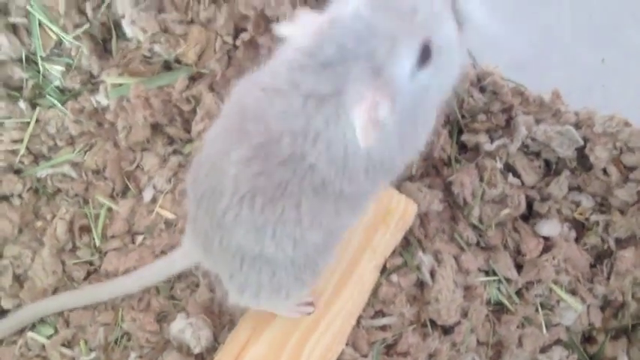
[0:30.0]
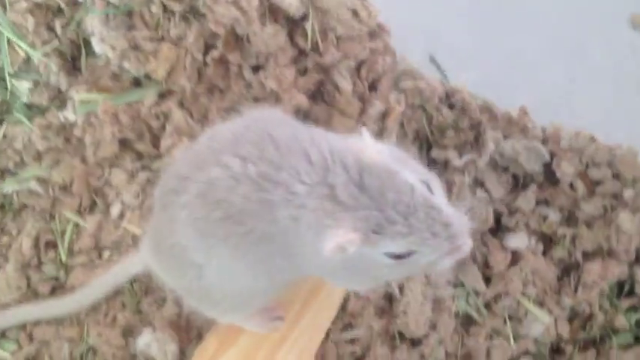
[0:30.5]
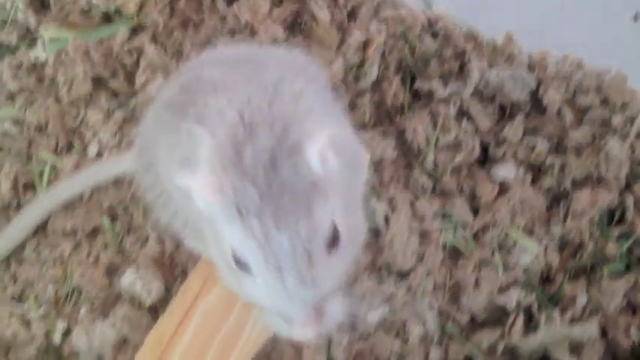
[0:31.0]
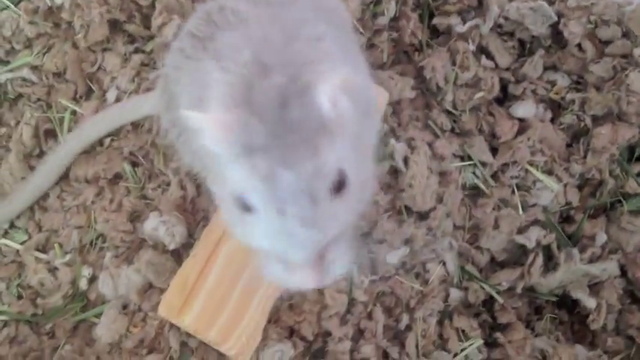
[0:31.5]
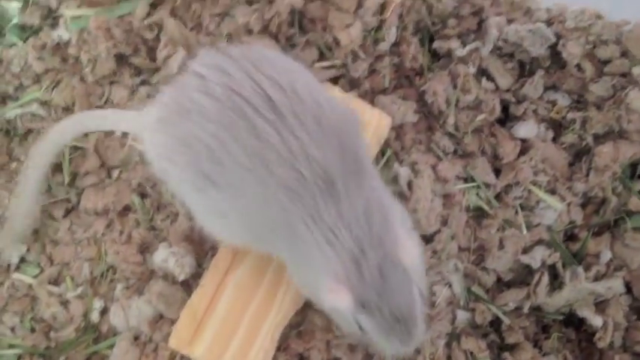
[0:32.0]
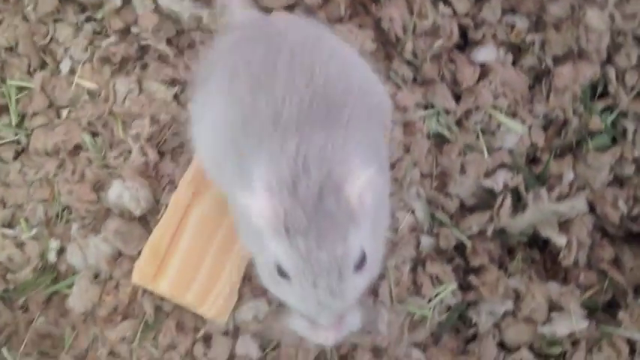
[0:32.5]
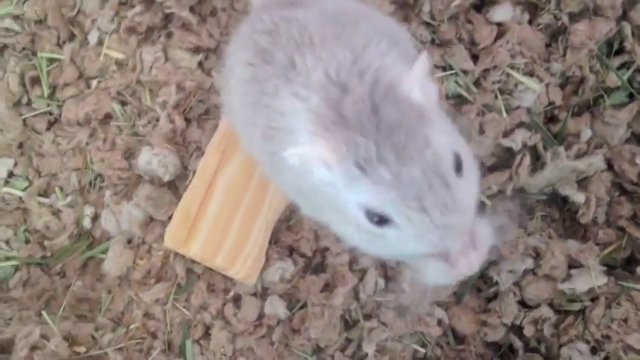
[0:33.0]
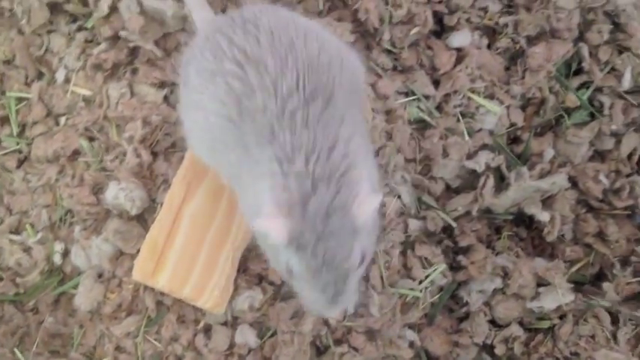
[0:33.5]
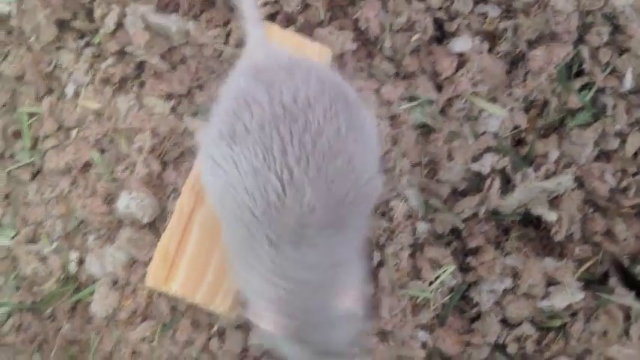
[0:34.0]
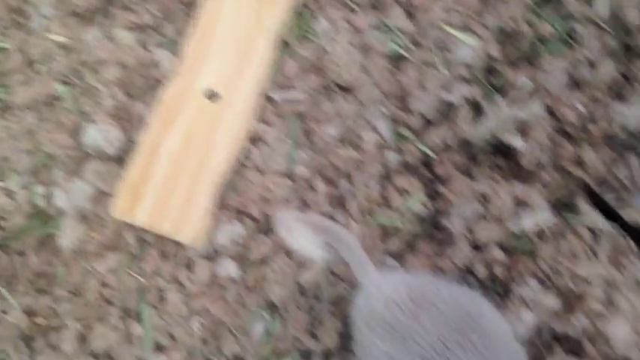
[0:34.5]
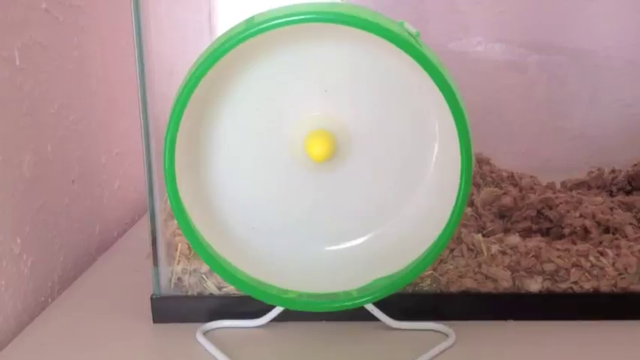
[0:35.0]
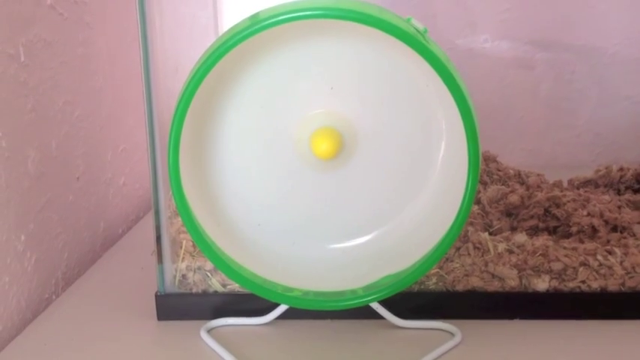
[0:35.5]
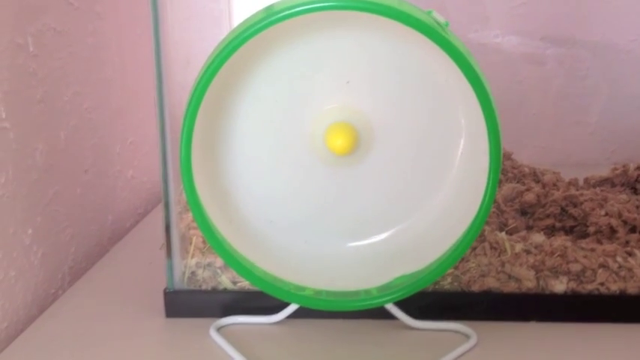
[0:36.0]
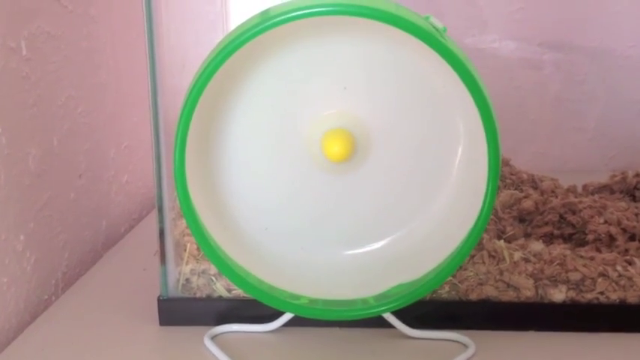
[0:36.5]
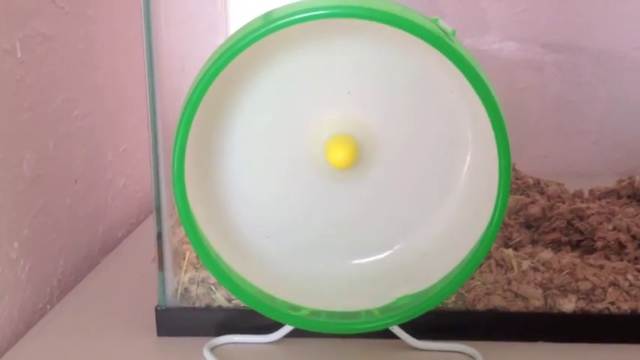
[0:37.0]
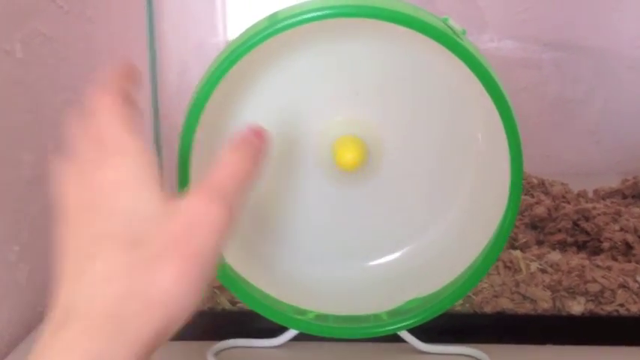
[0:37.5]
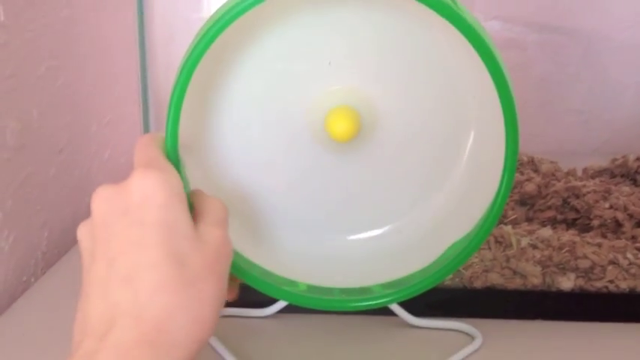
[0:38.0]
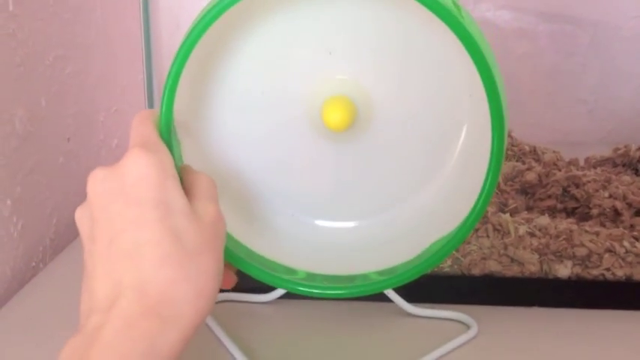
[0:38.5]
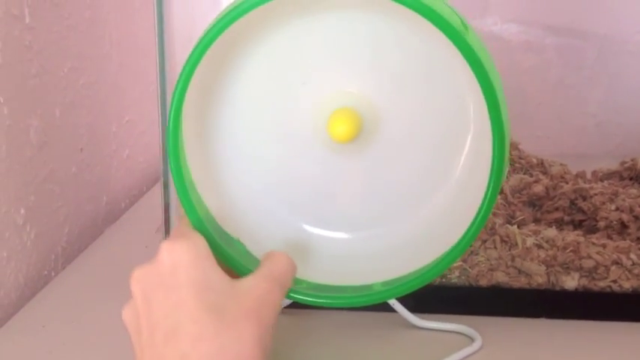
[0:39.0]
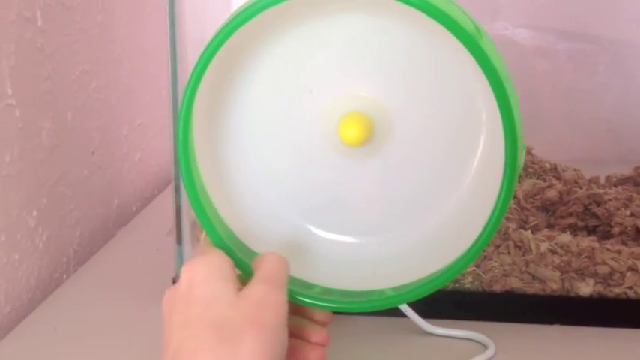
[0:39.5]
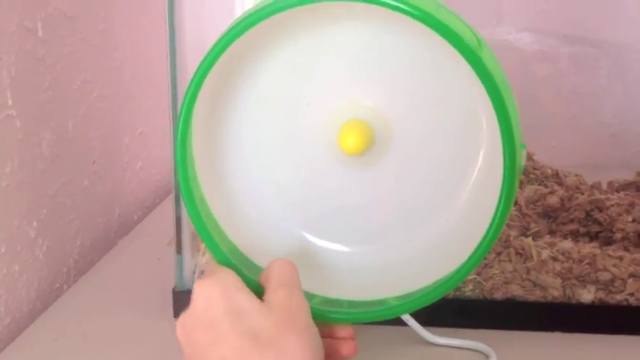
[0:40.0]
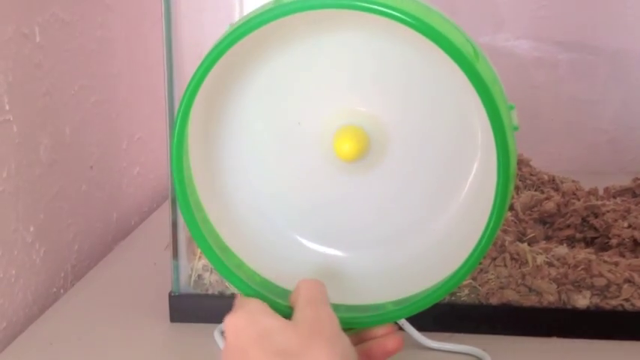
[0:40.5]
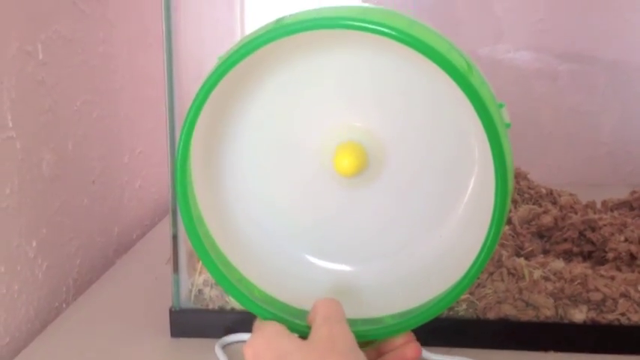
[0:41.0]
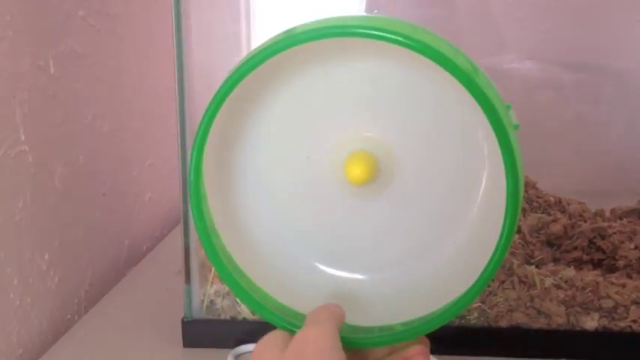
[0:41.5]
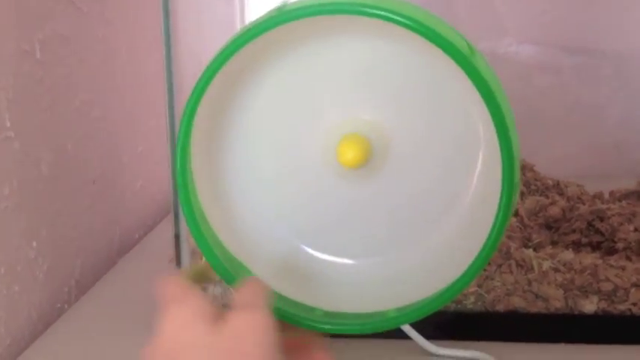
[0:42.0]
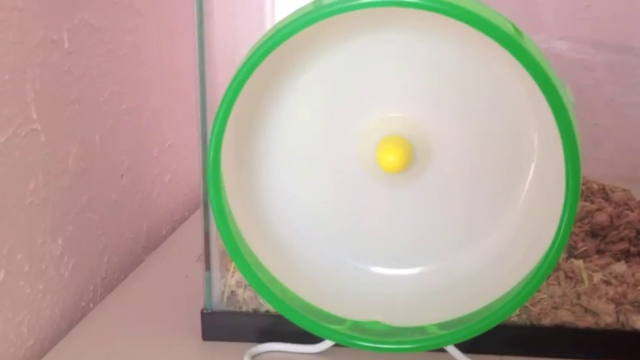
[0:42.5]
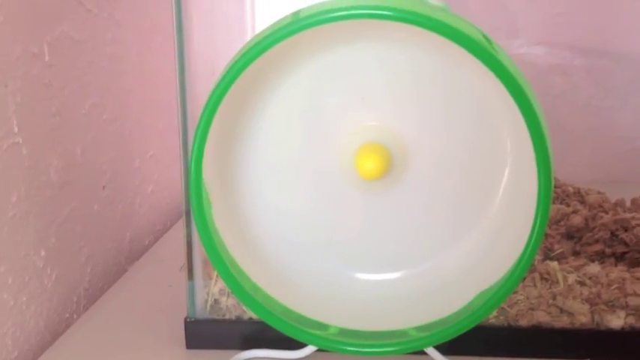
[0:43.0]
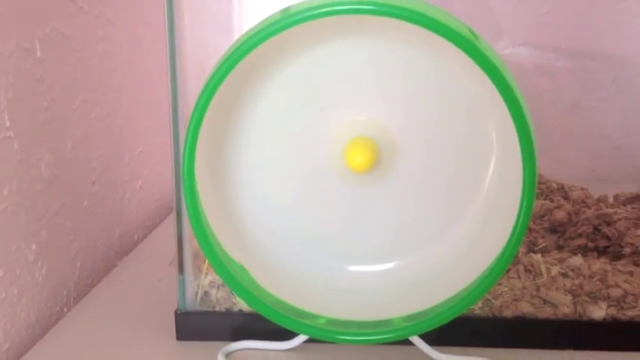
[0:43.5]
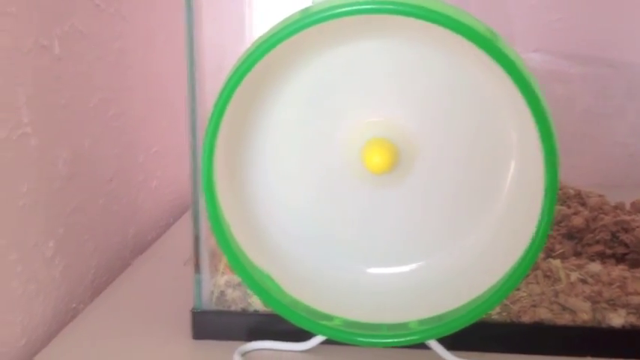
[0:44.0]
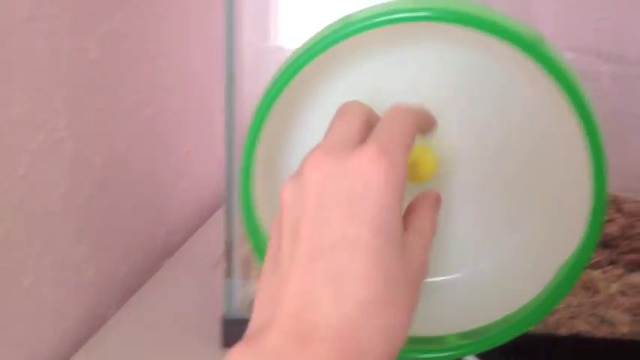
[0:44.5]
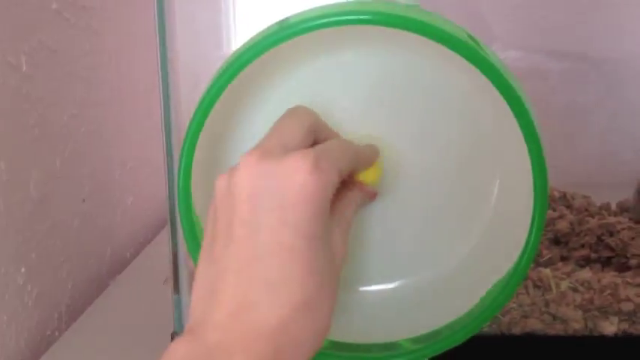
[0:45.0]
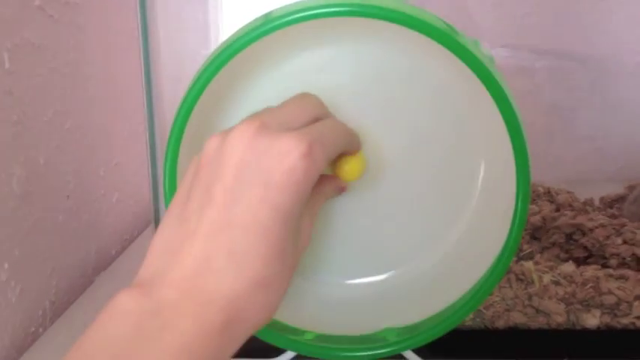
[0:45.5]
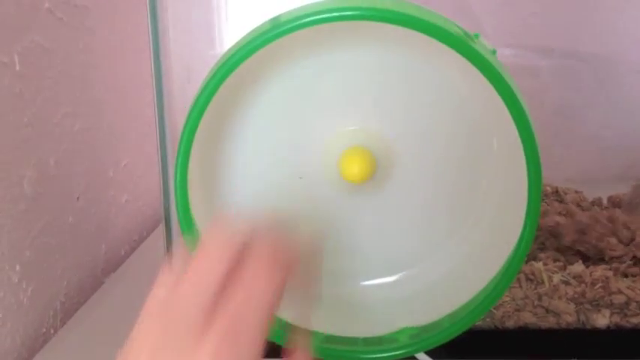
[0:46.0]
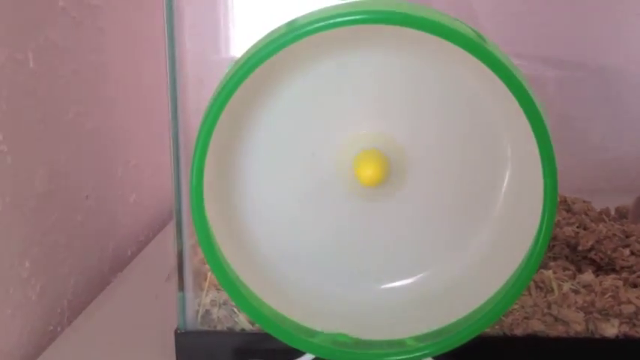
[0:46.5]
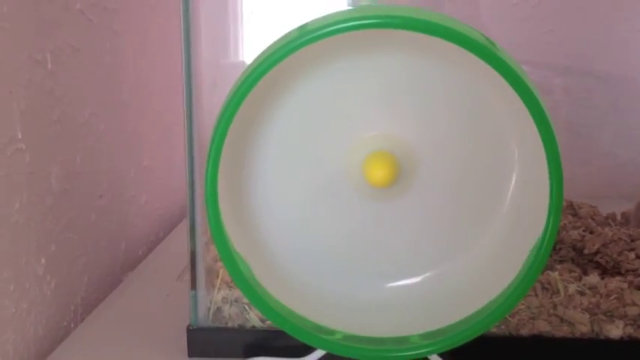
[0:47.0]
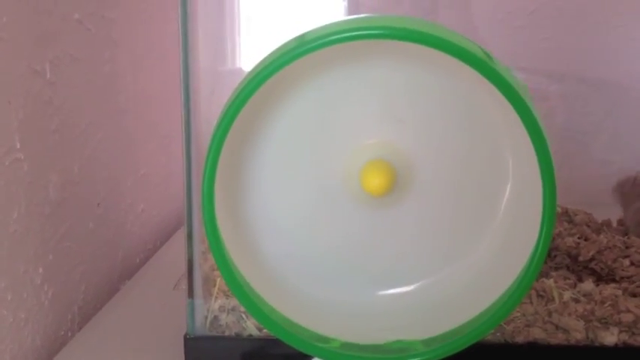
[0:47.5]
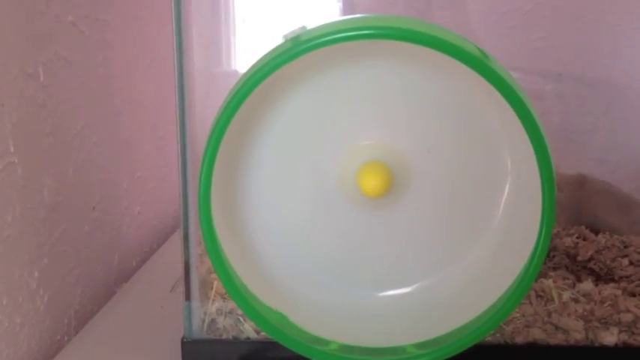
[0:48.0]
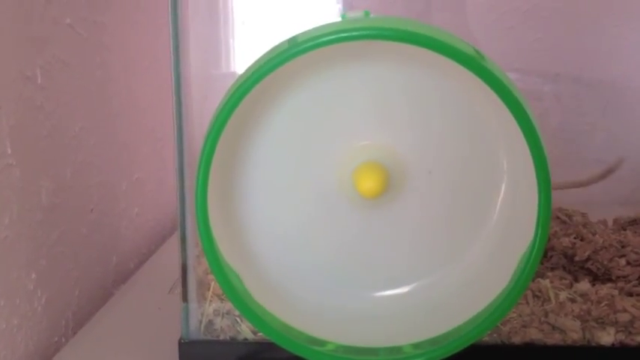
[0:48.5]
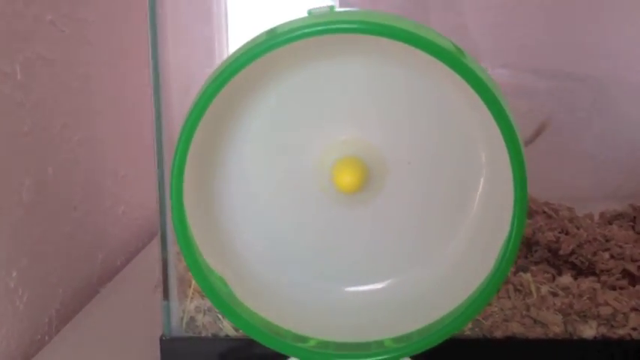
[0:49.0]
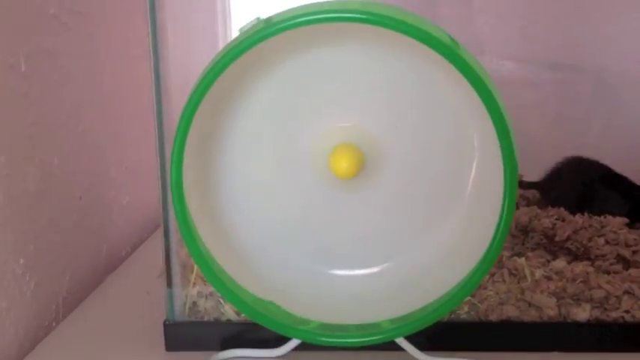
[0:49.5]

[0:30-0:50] The gerbil is still standing on its hind legs; it jumps down, then stands back up again. The video cuts to the gerbil wheel, still outside the enclosure; the enclosure is in the background, but no gerbils can be seen. The wheel is spinning very fast. A hand comes from the left of the screen and grips the wheel, with the thumb on the inside of the wheel and the forefingers on the outside, and pulls the wheel down slowly, spinning it as it goes. The hand then grabs the yellow section protruding from the centre and begins to spin that. The grey and black gerbils are visible in the background, running from side to side in their enclosure, where green grass is spread amongst the tree bark.